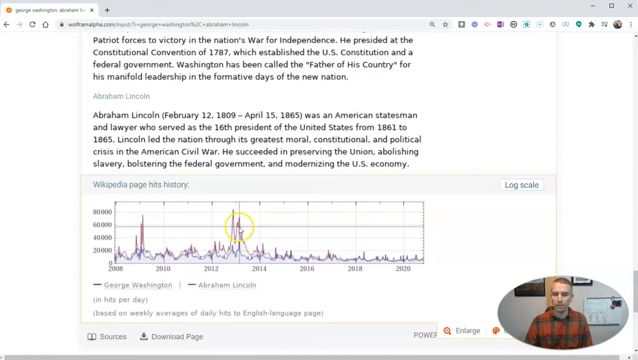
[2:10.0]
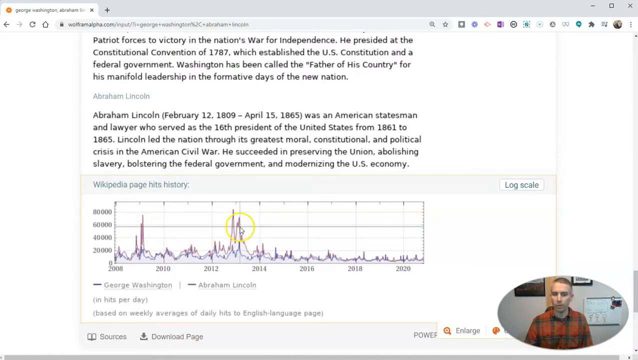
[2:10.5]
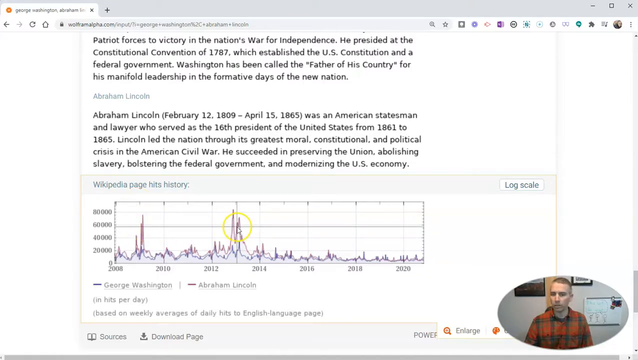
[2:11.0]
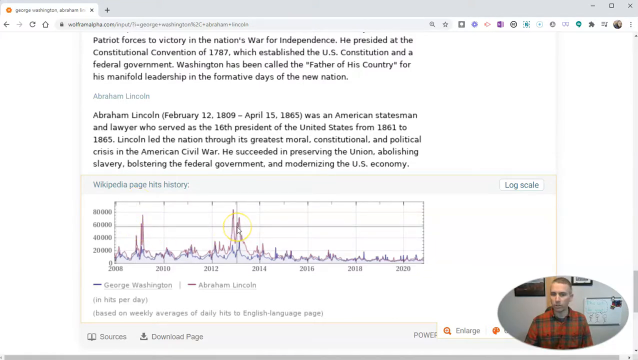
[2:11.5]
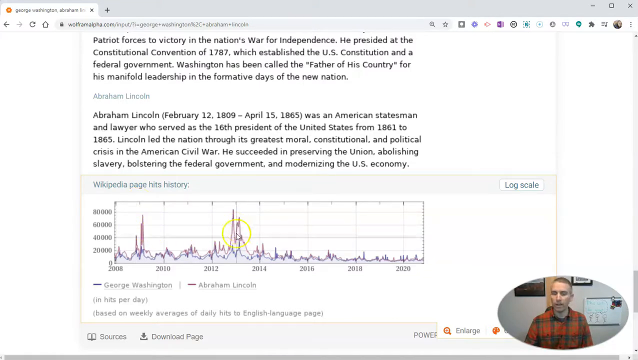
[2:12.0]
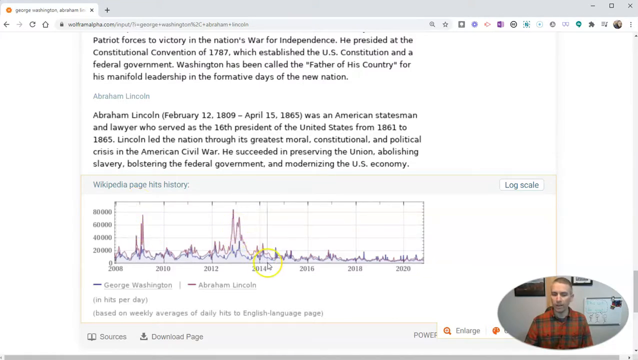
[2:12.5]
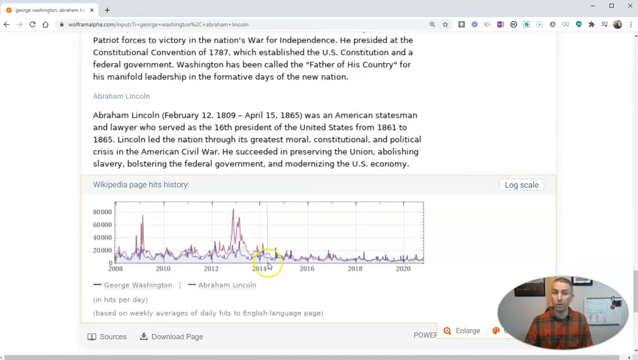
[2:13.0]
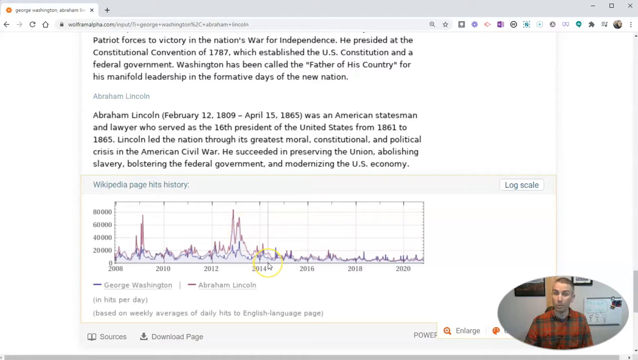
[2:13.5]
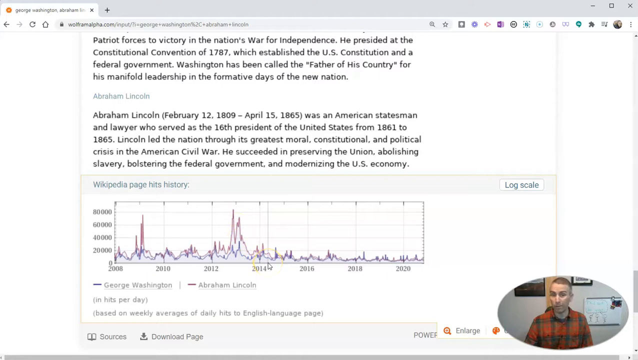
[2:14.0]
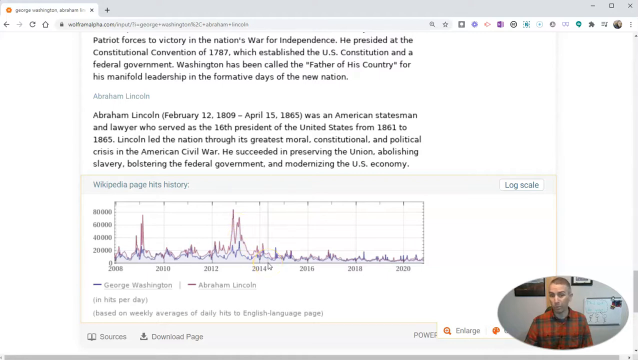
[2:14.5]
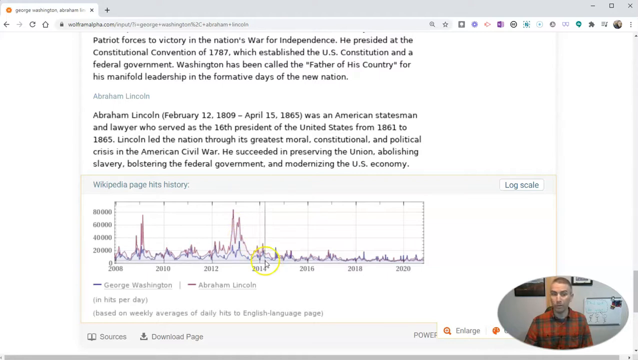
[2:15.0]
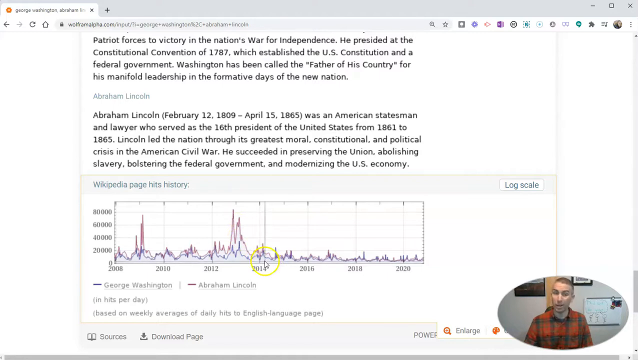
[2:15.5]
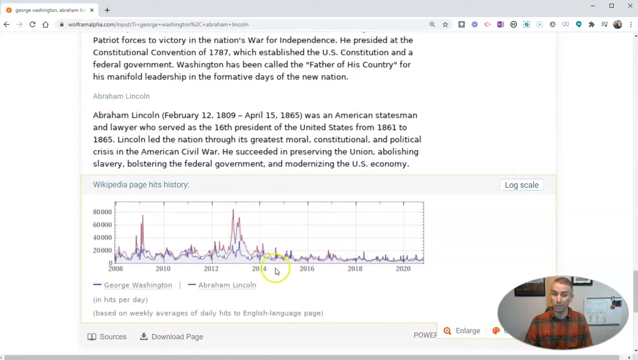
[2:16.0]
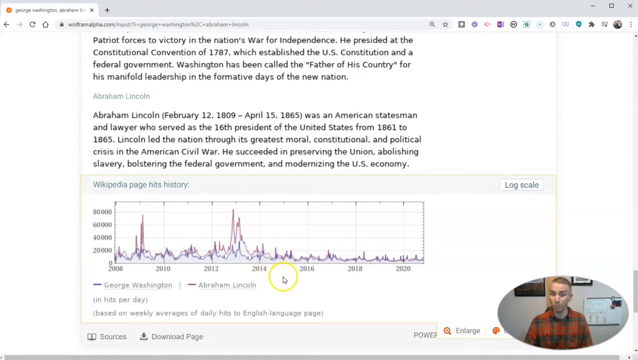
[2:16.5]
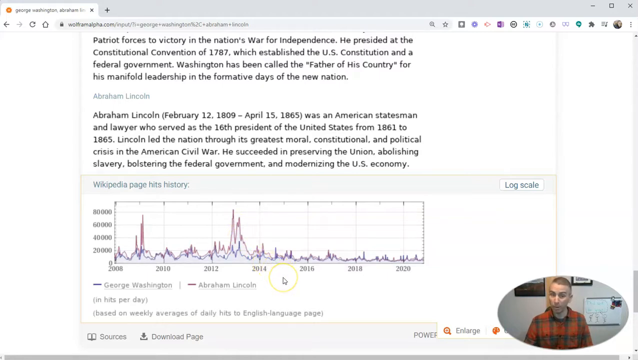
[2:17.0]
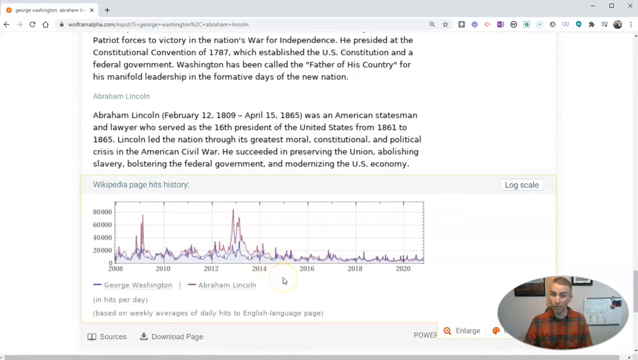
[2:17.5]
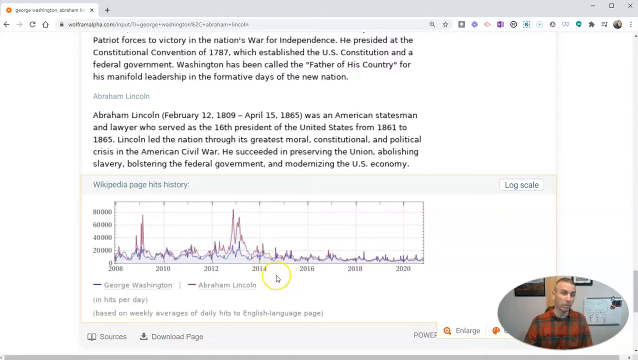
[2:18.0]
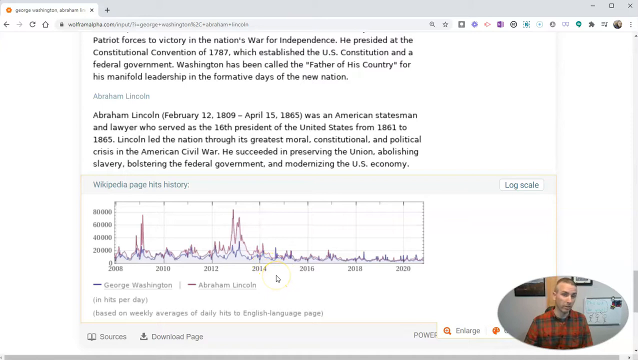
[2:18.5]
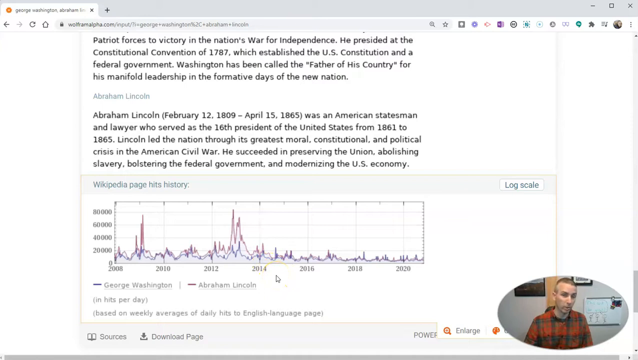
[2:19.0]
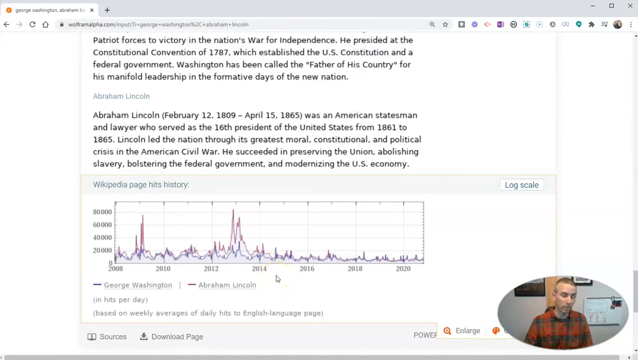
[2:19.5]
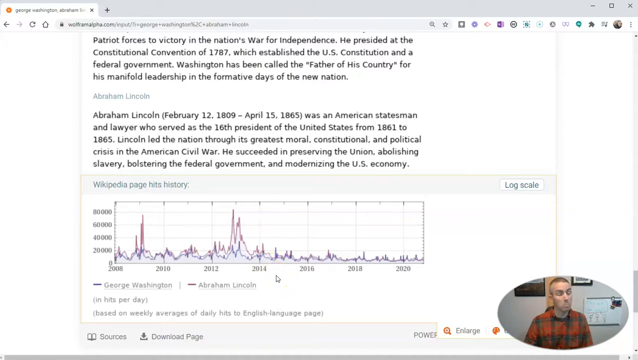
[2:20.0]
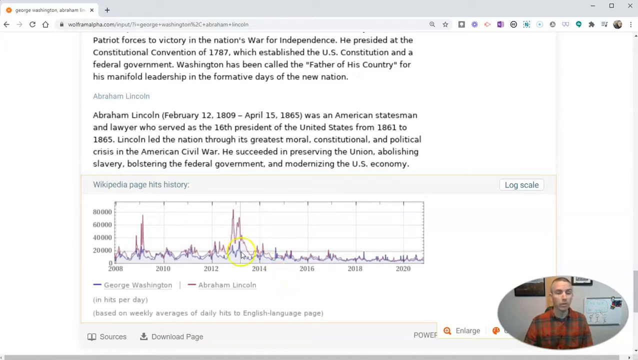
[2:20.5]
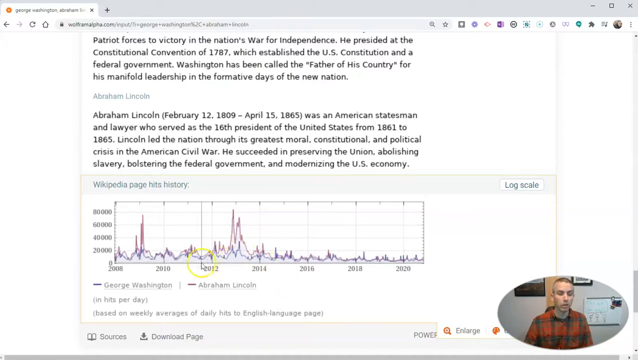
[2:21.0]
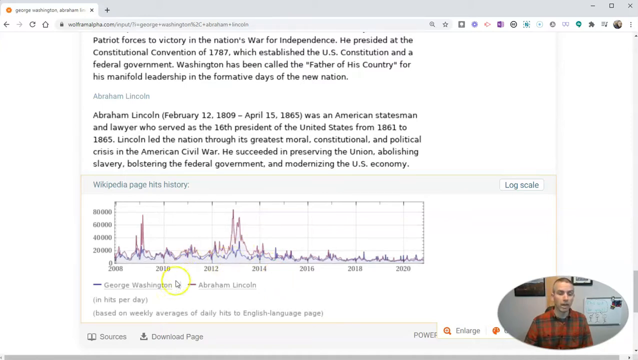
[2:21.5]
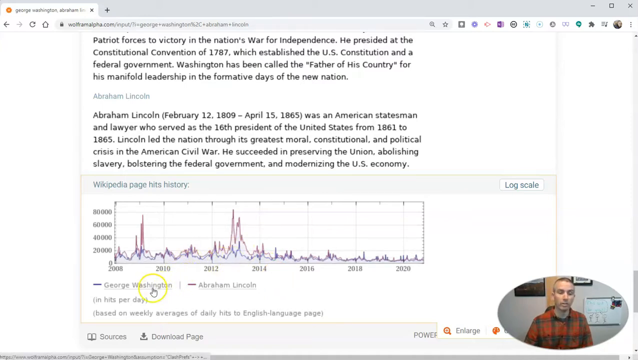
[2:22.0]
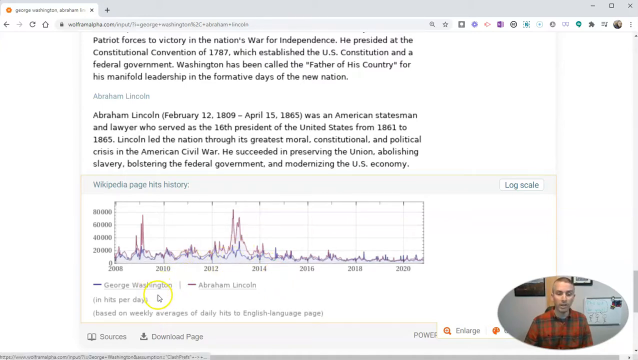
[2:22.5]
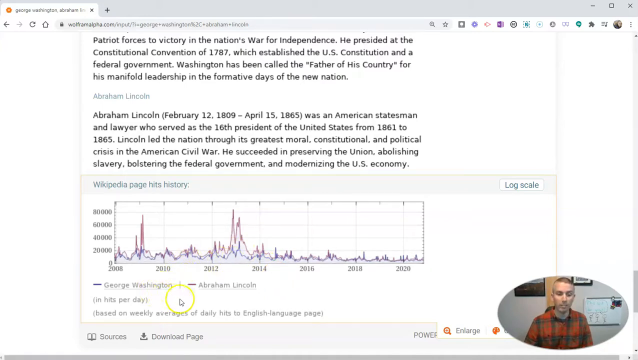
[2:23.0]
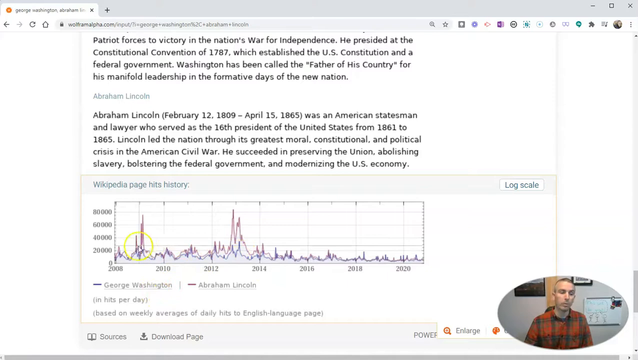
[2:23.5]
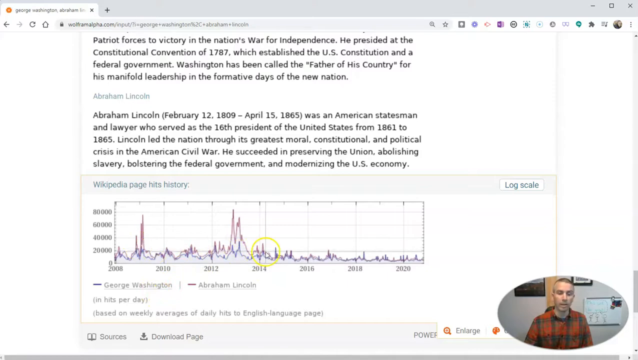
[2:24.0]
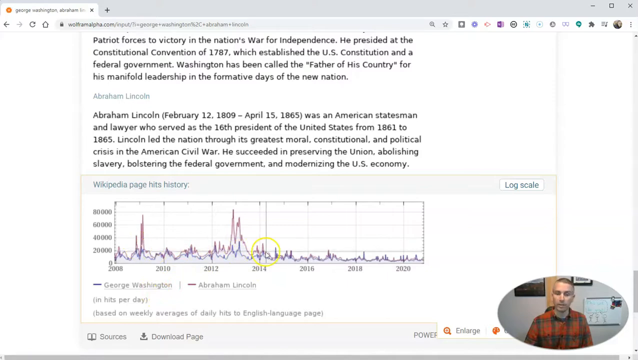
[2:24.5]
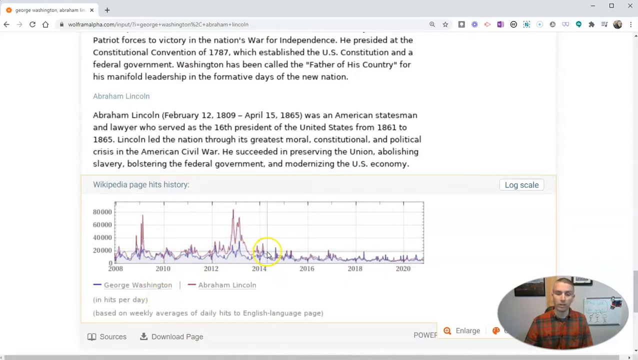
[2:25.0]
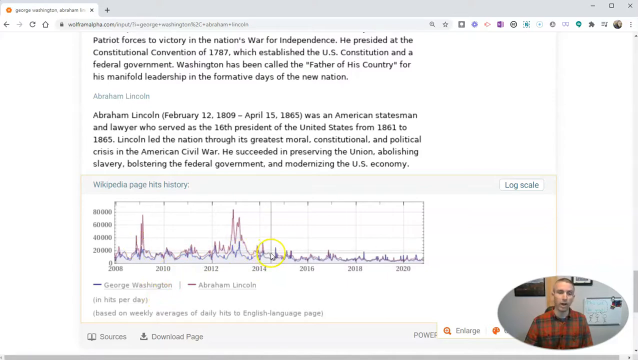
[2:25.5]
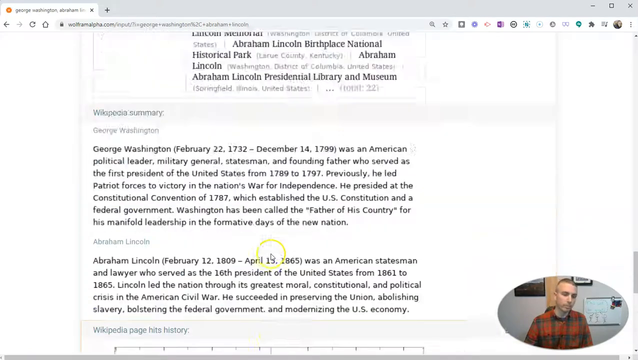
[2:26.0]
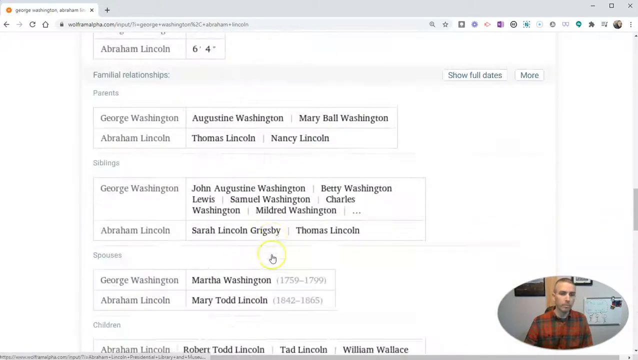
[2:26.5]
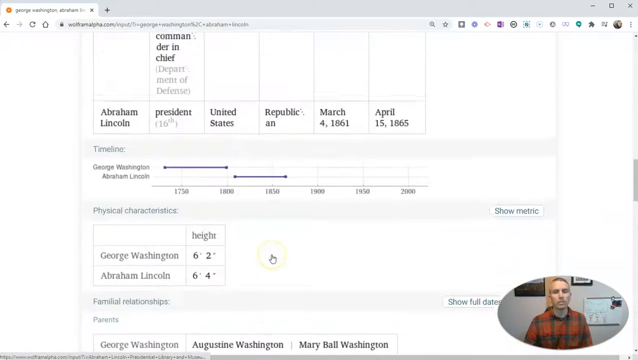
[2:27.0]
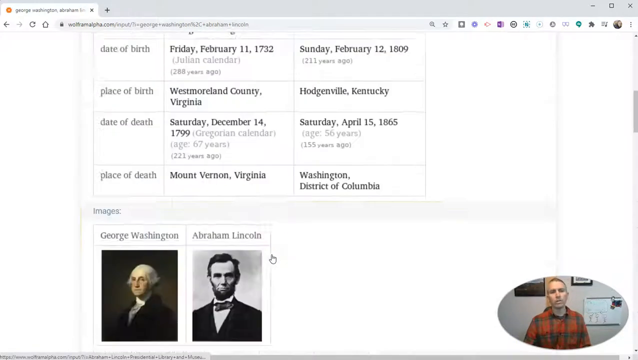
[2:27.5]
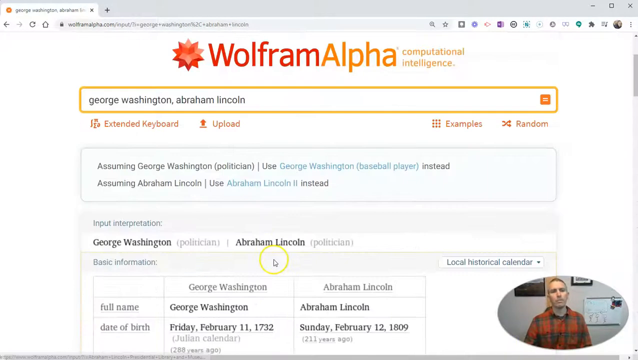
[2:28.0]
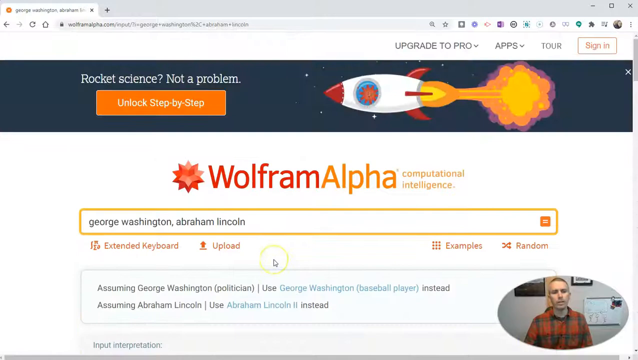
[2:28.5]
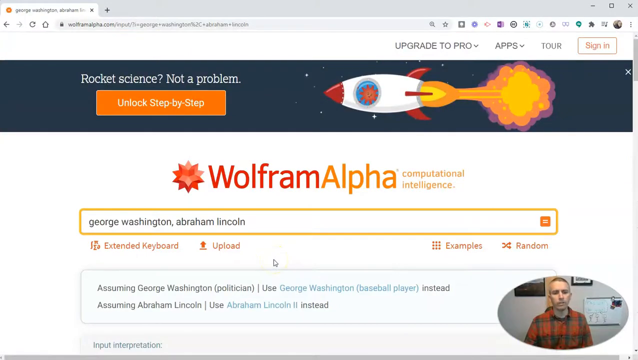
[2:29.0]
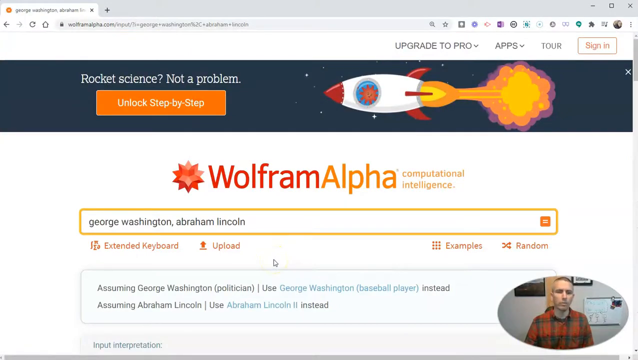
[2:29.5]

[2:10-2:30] The Wikipedia page hits history chart for George Washington and Abraham Lincoln is on the Wolfram Alpha search engine page, with George Washington as the blue line and Abraham Lincoln as the red line; over time, Abraham Lincoln seems to have more spikes than George Washington. The person moves the mouse pointer around the chart, pointing out different parts of the line graph, while their video feed is in the lower right corner of the screen. They then scroll all the way back up to the search box at the top of the page, which holds George Washington, a comma, and Abraham Lincoln. The first result, the input interpretation, lists George Washington as a politician and Abraham Lincoln as a politician.